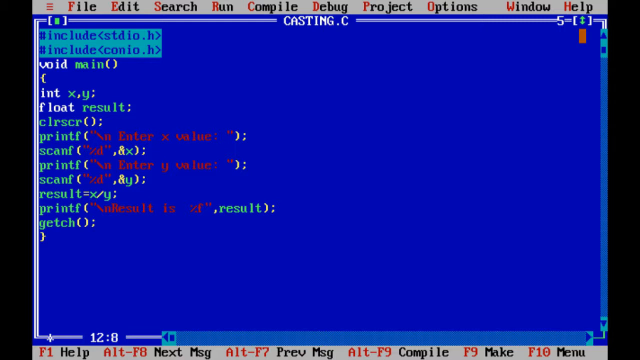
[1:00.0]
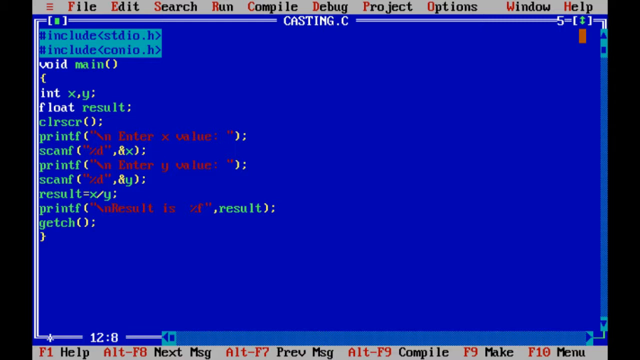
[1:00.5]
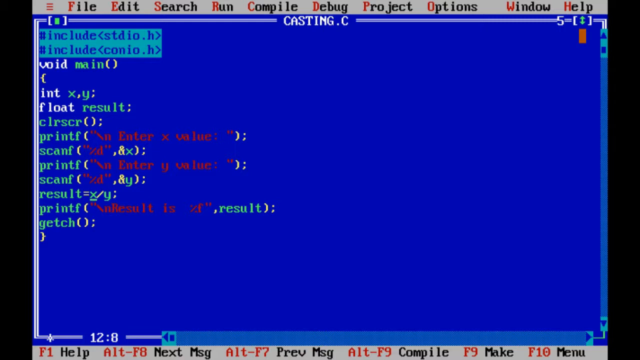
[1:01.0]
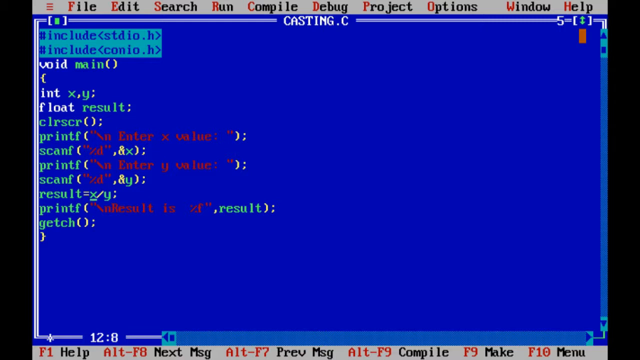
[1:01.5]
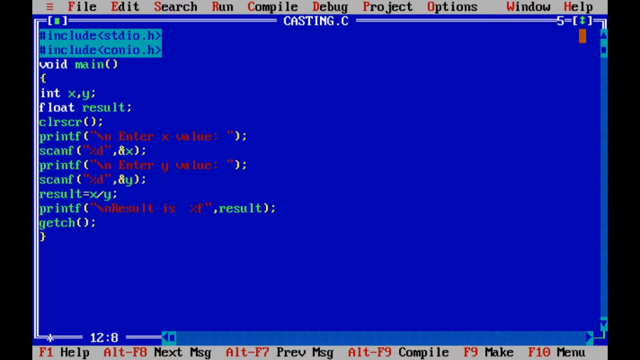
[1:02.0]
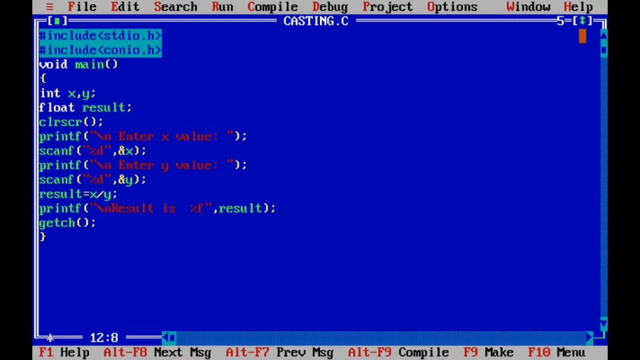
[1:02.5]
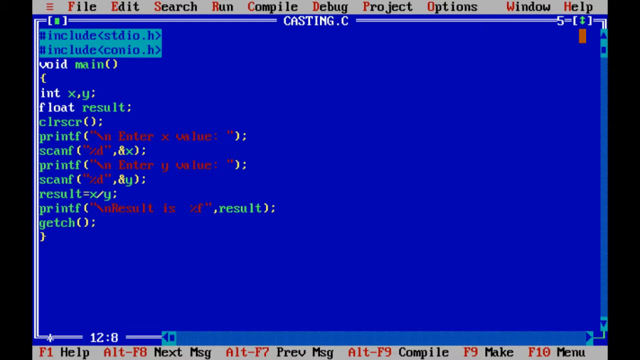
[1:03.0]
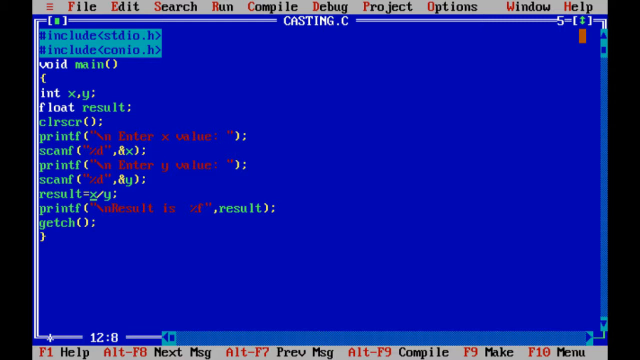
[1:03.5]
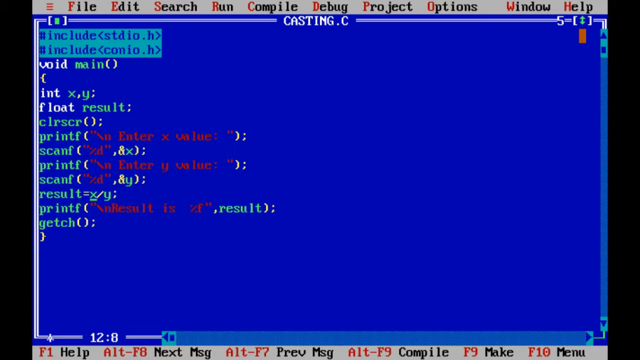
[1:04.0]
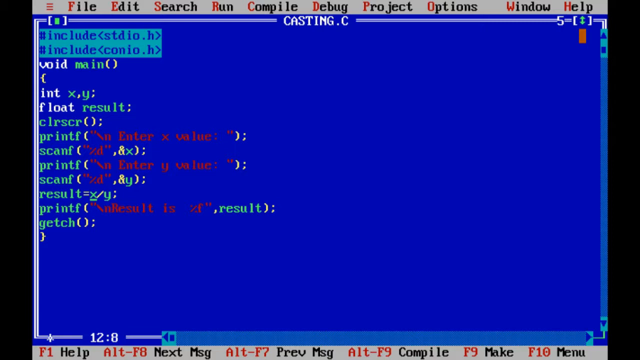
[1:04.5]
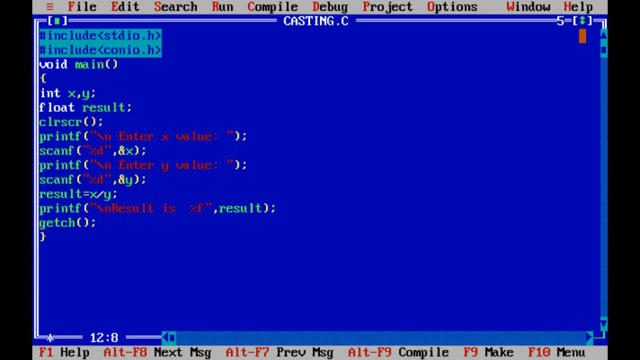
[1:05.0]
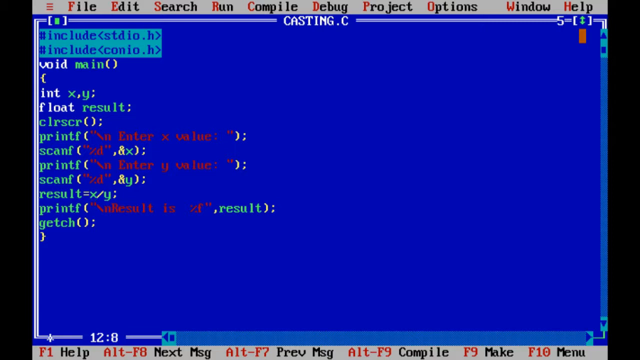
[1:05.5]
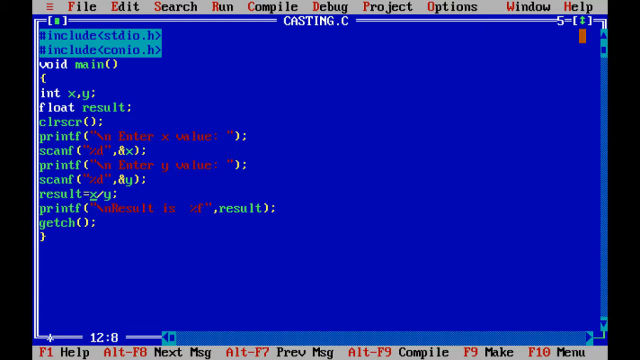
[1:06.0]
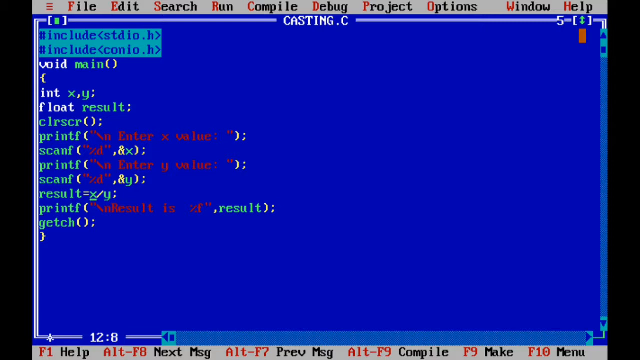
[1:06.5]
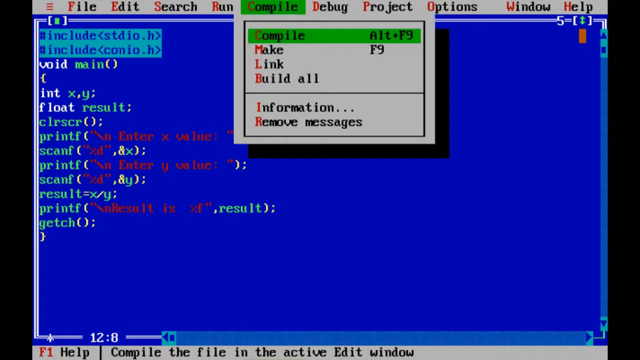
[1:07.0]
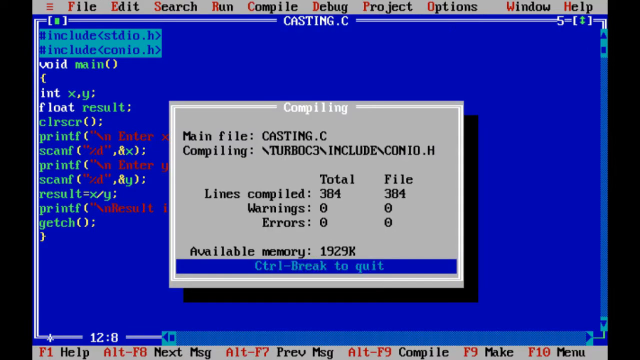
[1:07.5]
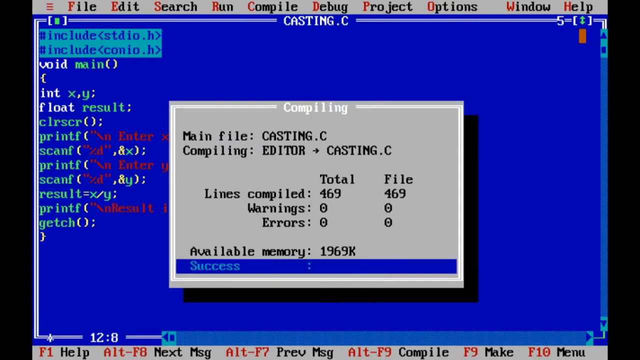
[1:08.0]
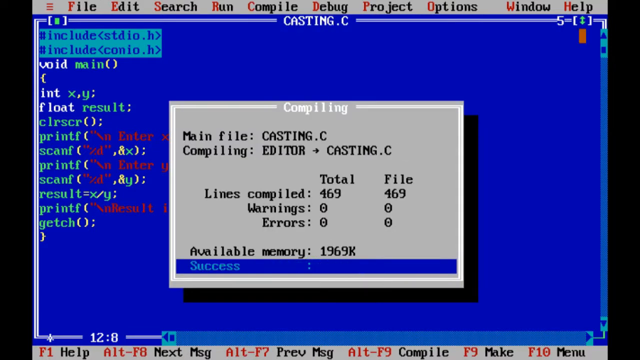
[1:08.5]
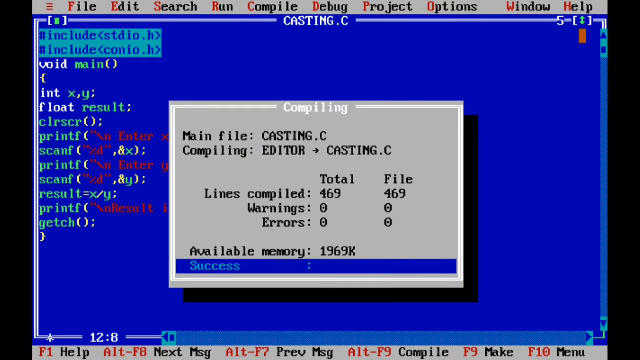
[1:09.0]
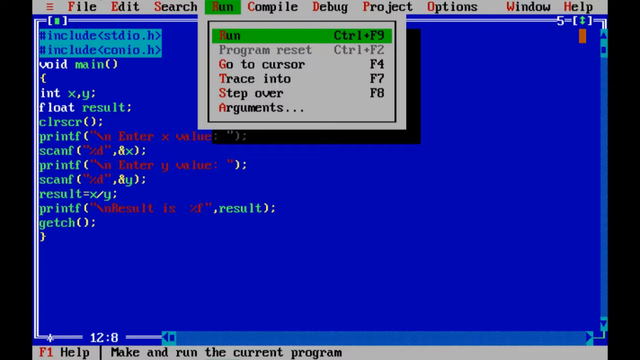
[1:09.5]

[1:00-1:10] A computer screen shows an integrated development environment with a short function in what looks like the C programming language. The screen starts out static, then the user navigates to the header menu, which has nine options: file, edit, search, run, compile, debug, project, options, window and help. They hover over the compile option, which highlights it with a green background and opens a dropdown with six options: compile, make, link, build all, information and remove messages. The top line, "compile alt+F9", is highlighted in green. The dropdown then appears to disappear, and a new window with a grey background, titled "Compiling", appears in the center of the screen, overlaying the blue main window. Black text moves quickly in it, making it hard to read; it appears to be running a process.